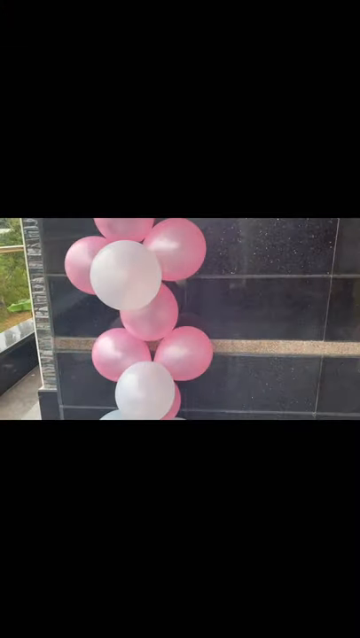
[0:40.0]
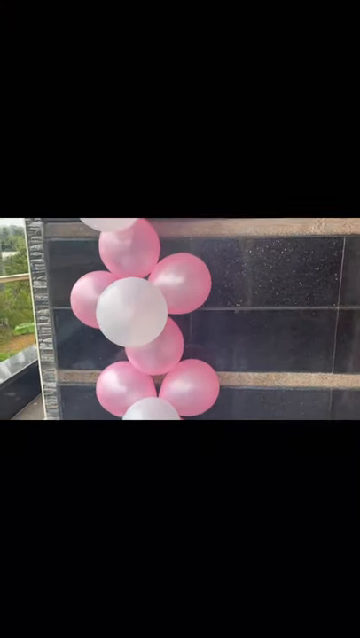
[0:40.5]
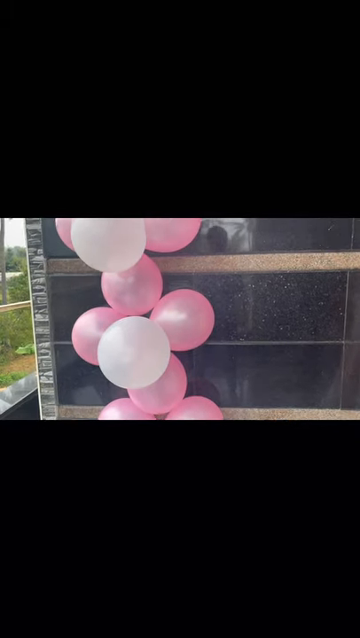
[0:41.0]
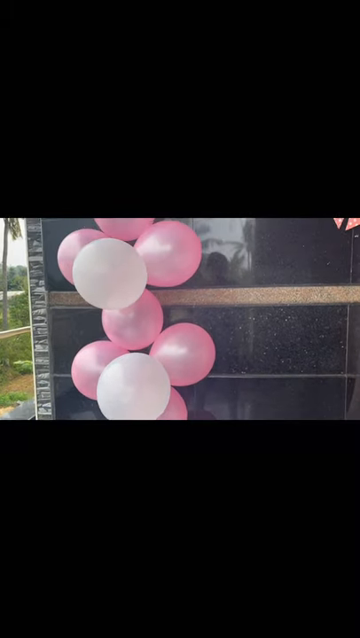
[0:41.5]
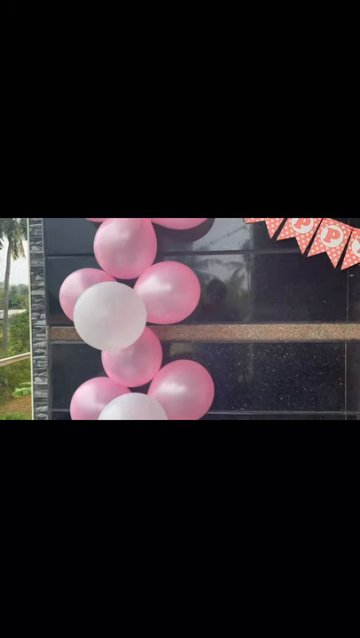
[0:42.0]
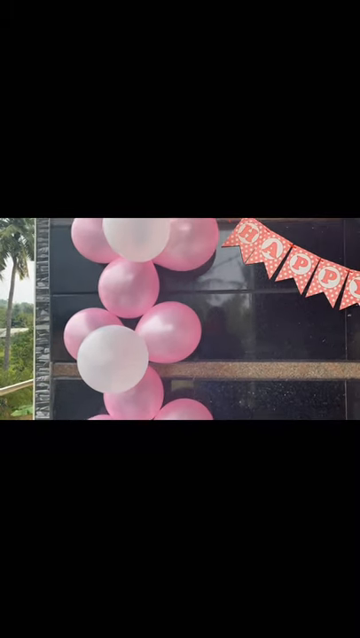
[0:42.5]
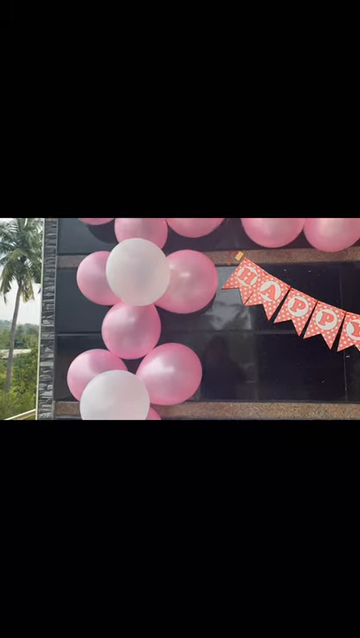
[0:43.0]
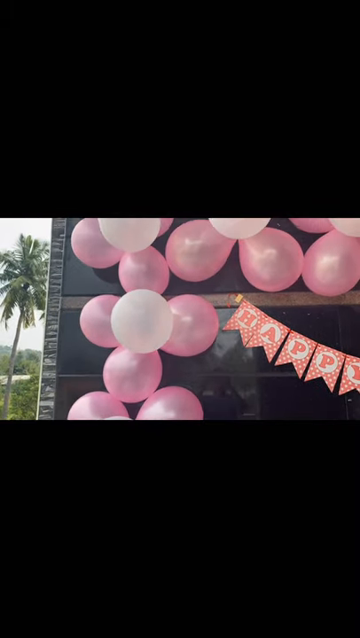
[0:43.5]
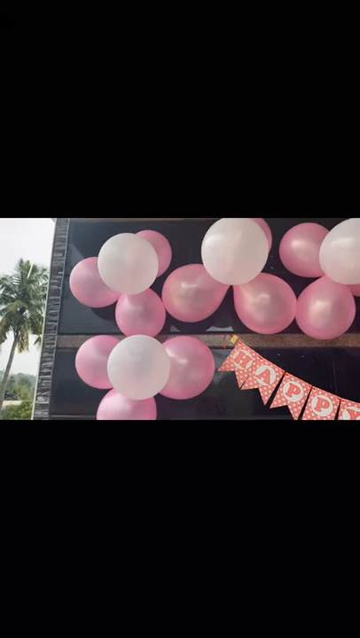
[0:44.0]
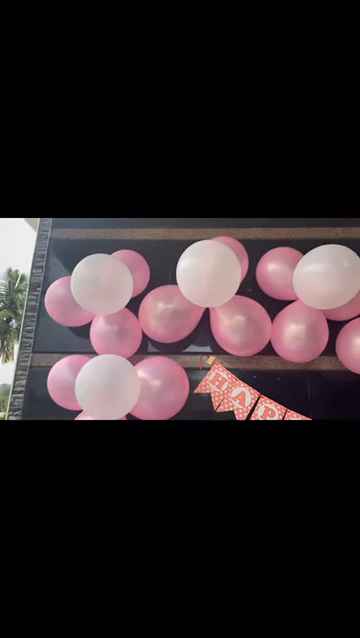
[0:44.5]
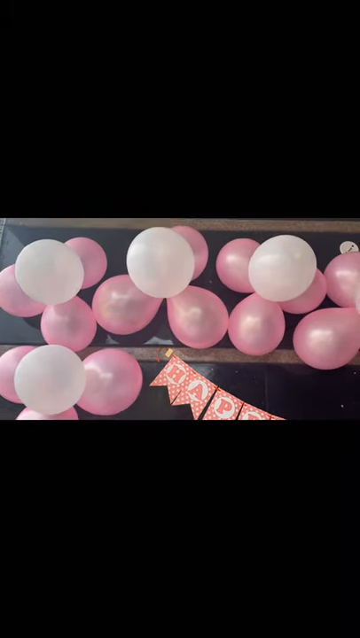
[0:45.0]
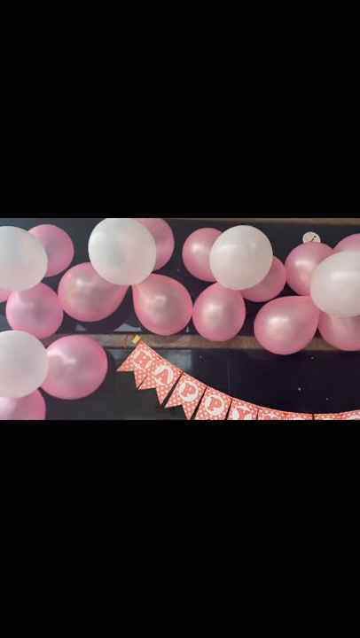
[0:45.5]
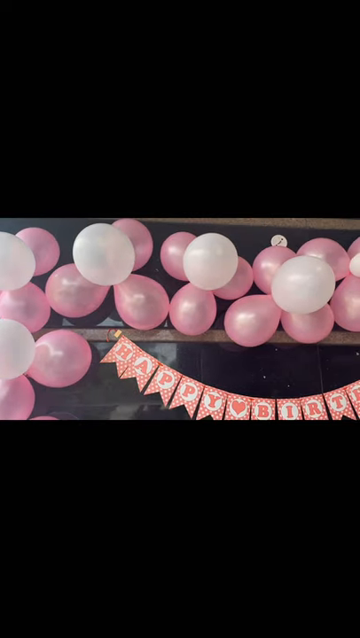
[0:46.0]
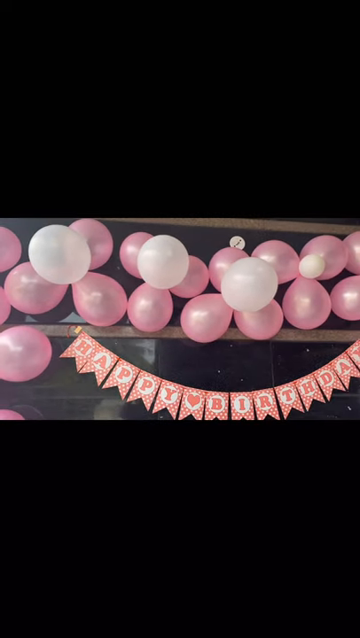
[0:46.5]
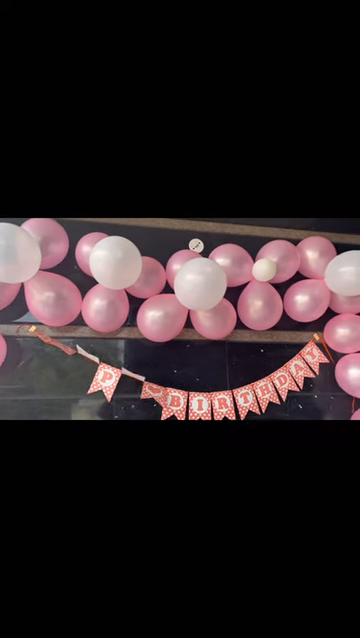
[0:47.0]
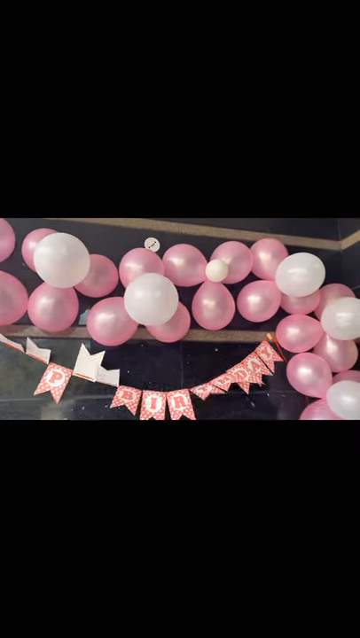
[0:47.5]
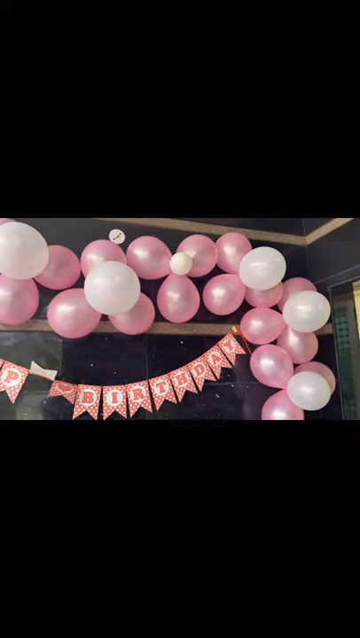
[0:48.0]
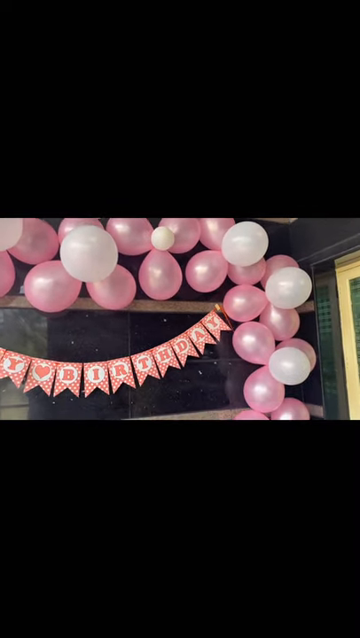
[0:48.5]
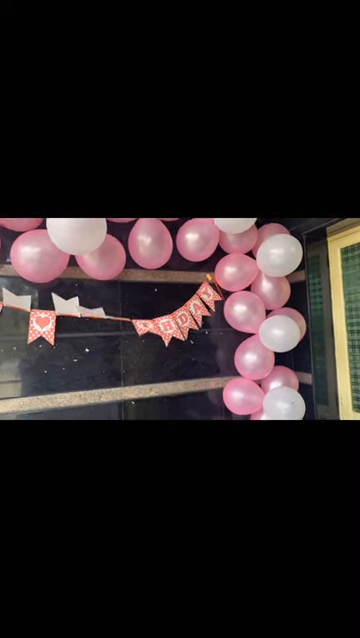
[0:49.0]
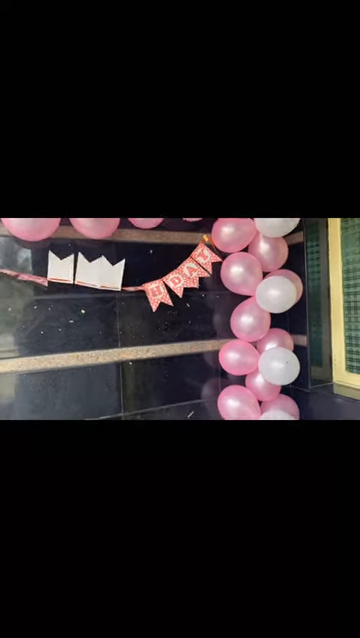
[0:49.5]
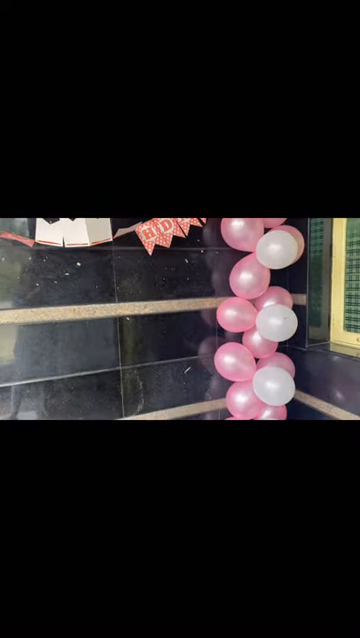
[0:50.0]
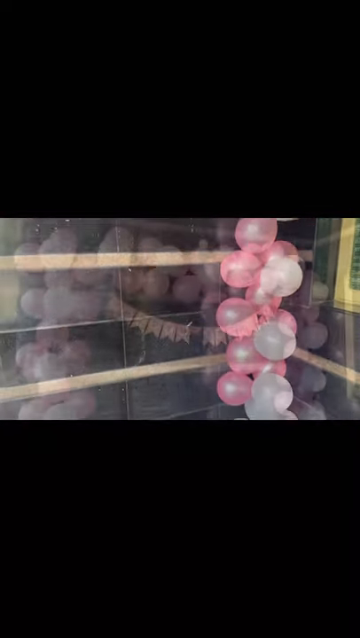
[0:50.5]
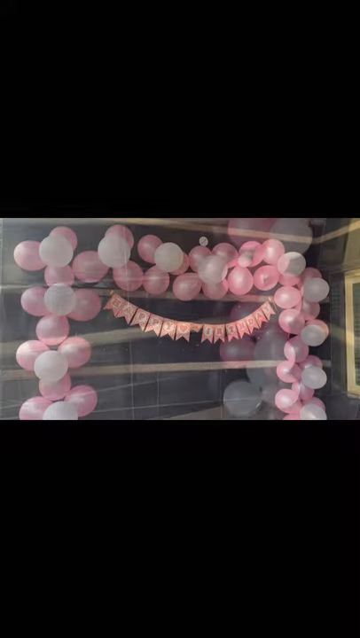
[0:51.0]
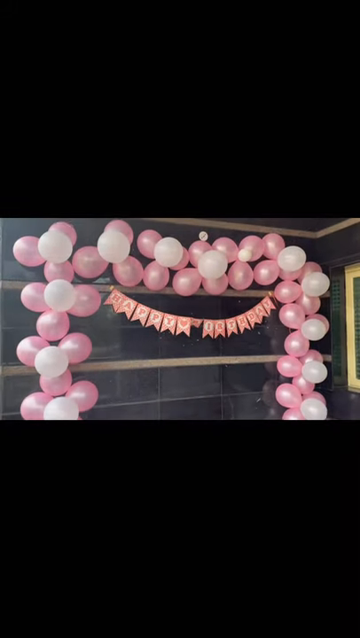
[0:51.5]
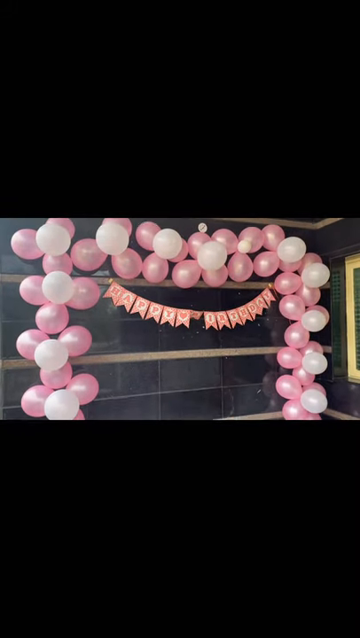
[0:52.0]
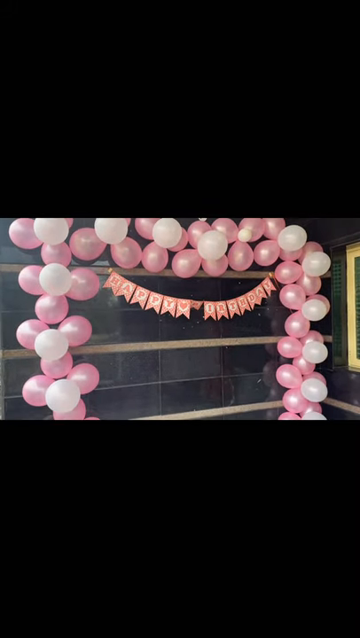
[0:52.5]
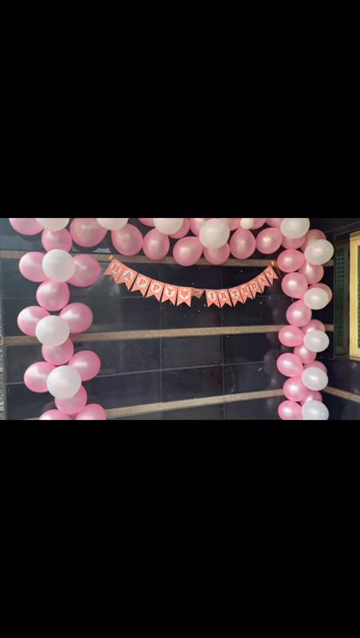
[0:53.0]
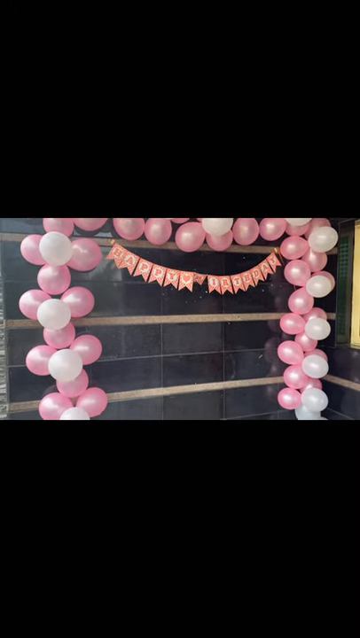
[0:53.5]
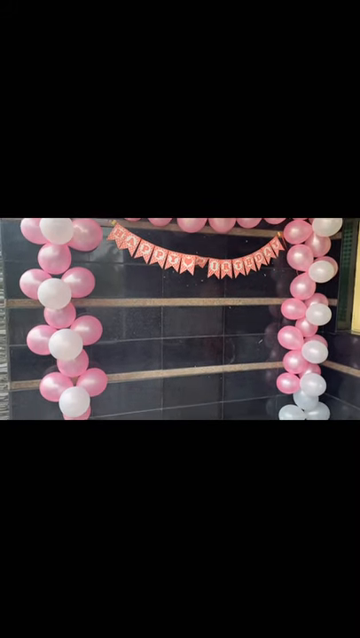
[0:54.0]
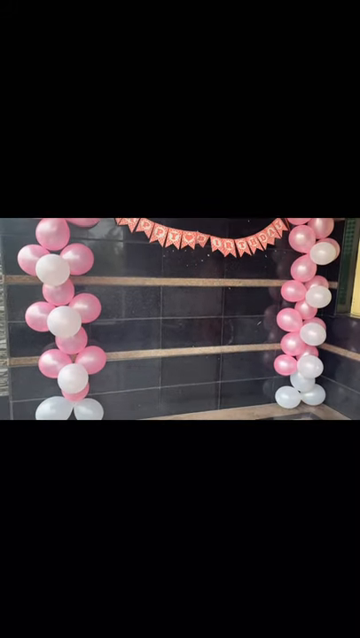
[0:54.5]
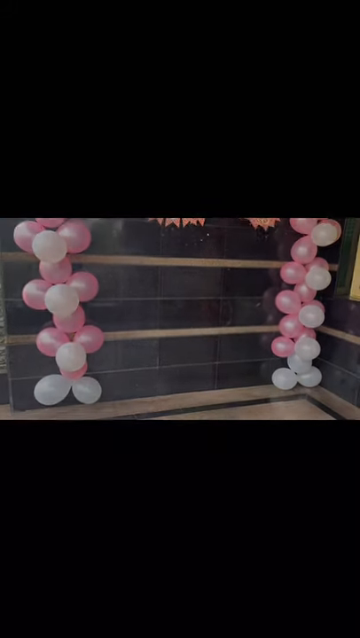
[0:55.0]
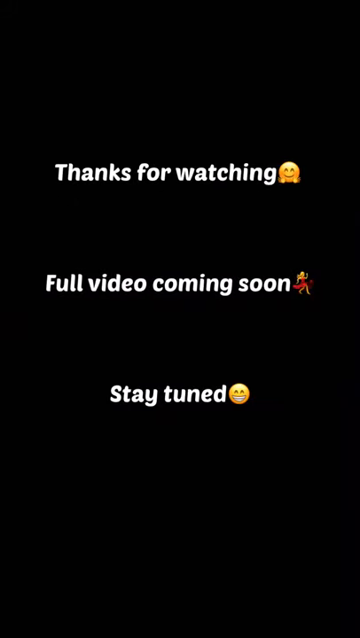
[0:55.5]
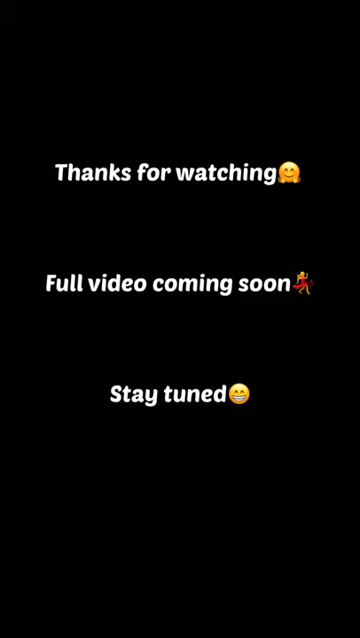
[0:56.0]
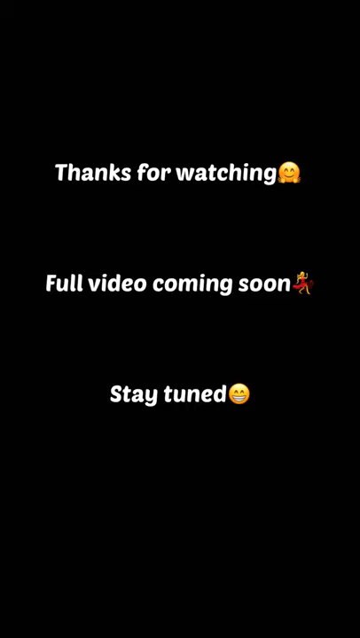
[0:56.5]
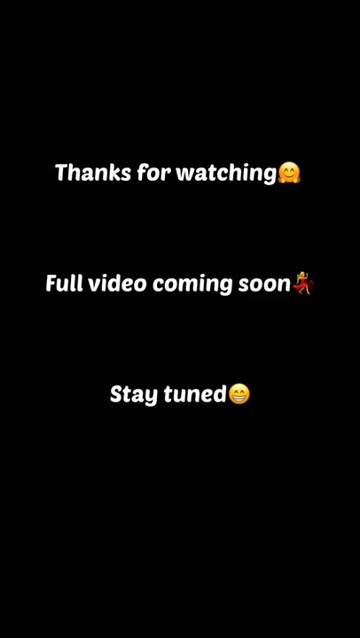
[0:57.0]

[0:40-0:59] Balloons are in front of a wall with some grid lines on it; the wall is made of marble, and light reflects off of it. The camera zooms up, showing that the balloons have been used to create some kind of frame on the wall, and inside the frame are the message happy birthday and some birthday cards. The scene shifts to a wider view, revealing that it is like a balloon doorway; inside it is a sign reading "happy birthday," written in giant card letters with a curvature almost like a smiley face. The camera zooms down to show the entire thing. At the end, white text on a pitch-black background reads "thanks for watching" with a kind of blushing smiley emoji. A few lines below, it reads "full video coming soon" with another emoji of an unclear type, and a few lines under that, "stay tuned" with another kind of smiley face emoji.